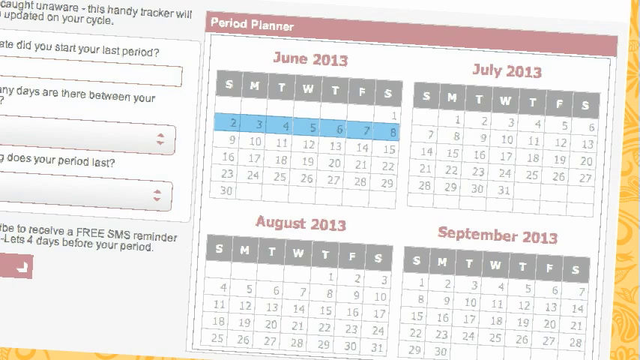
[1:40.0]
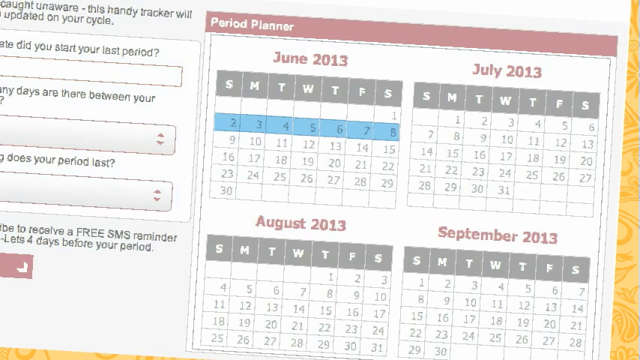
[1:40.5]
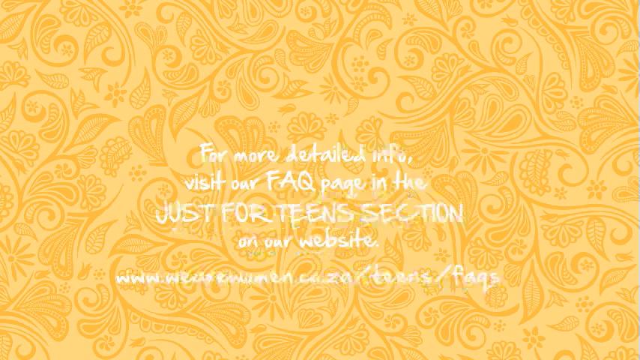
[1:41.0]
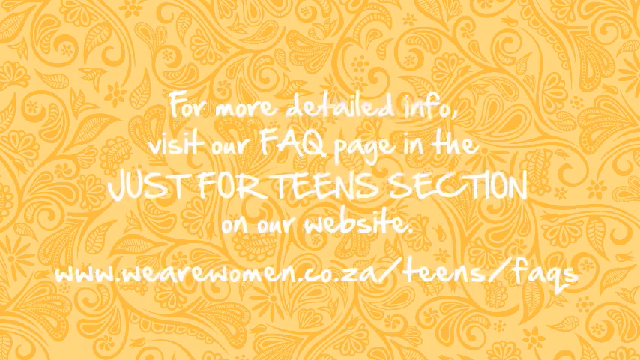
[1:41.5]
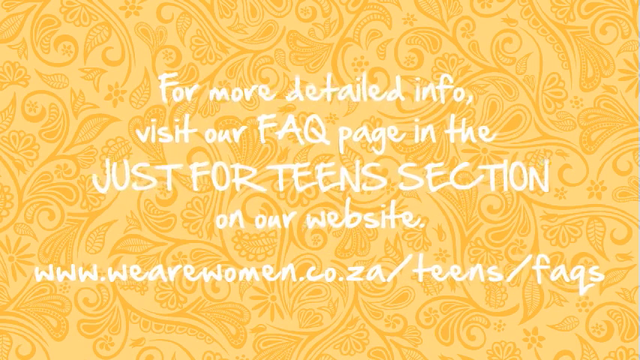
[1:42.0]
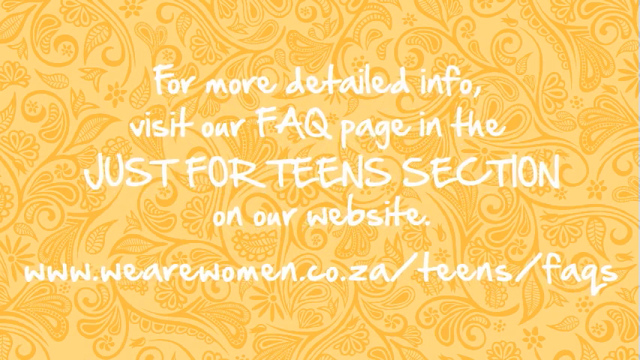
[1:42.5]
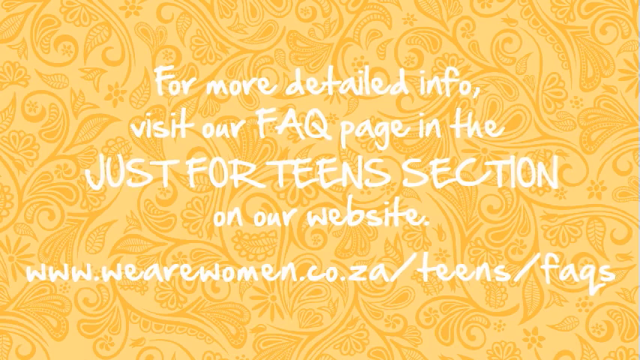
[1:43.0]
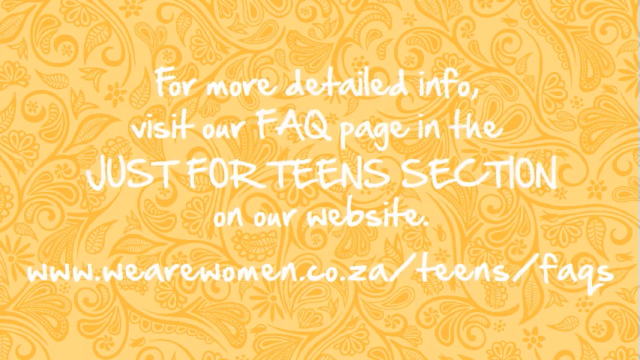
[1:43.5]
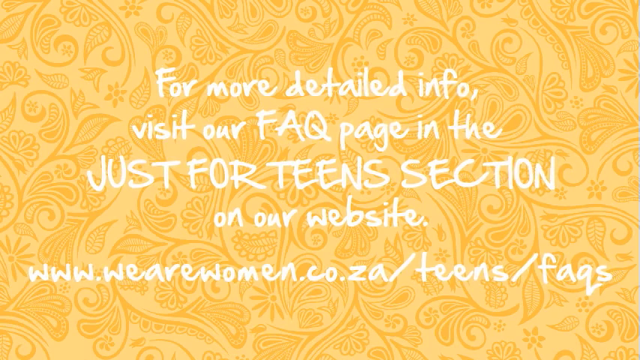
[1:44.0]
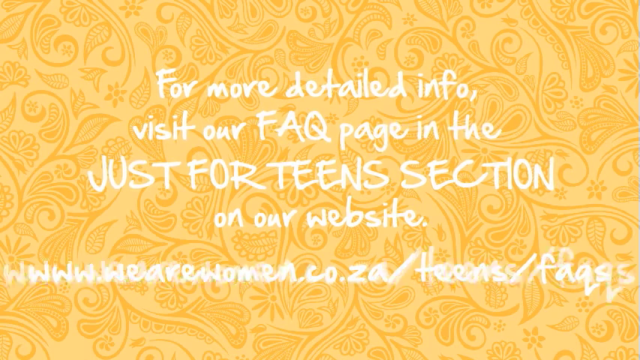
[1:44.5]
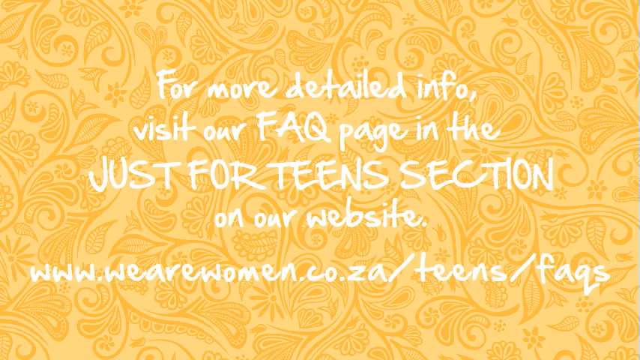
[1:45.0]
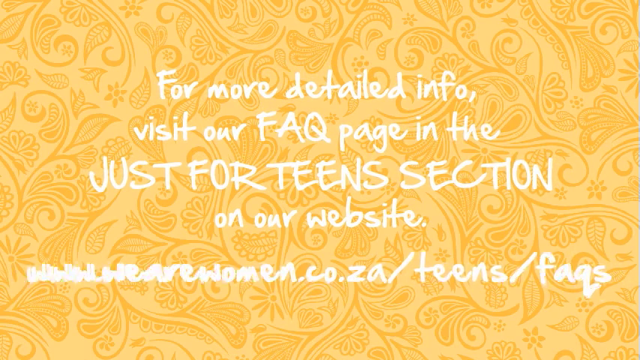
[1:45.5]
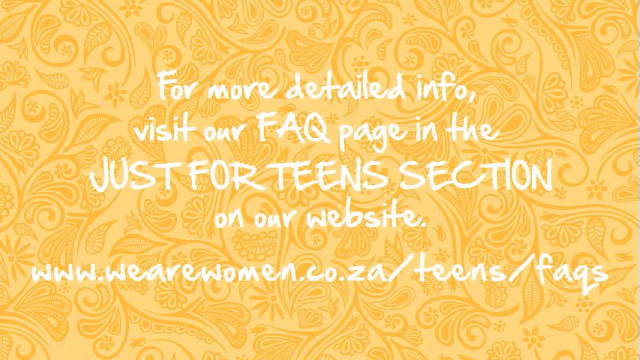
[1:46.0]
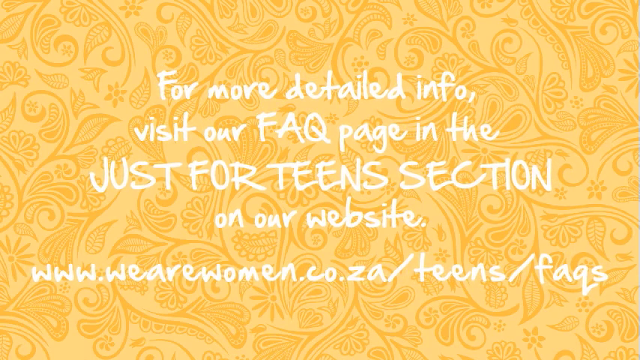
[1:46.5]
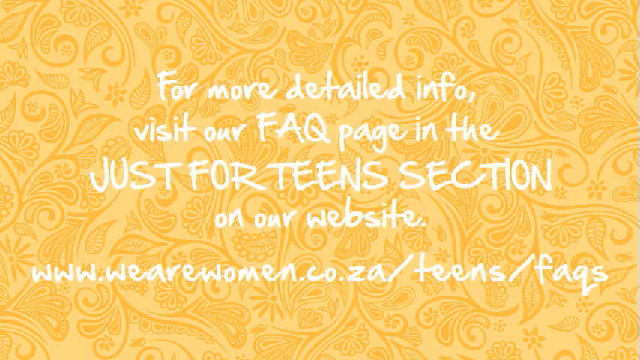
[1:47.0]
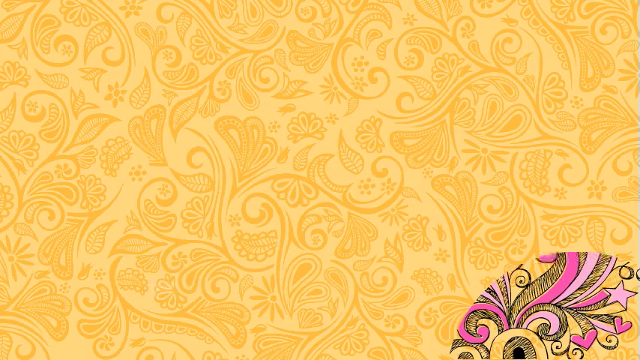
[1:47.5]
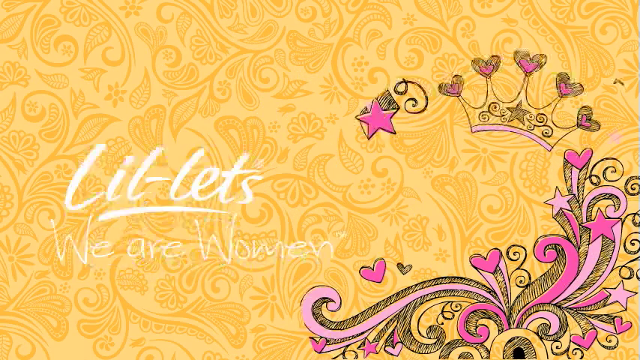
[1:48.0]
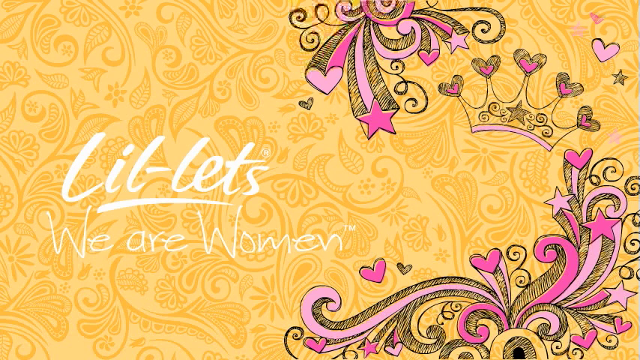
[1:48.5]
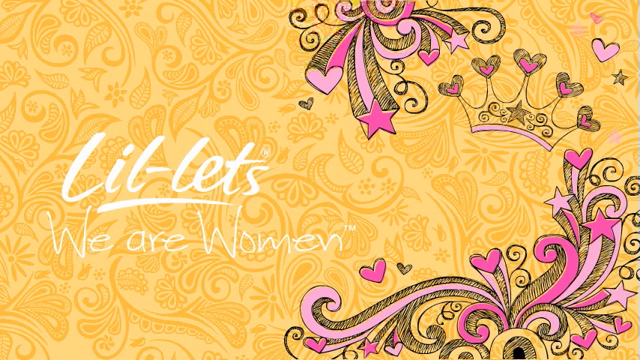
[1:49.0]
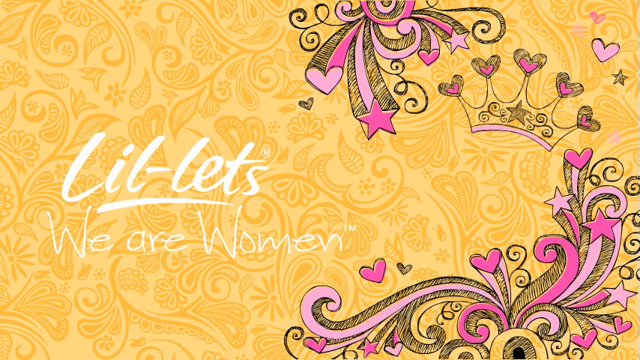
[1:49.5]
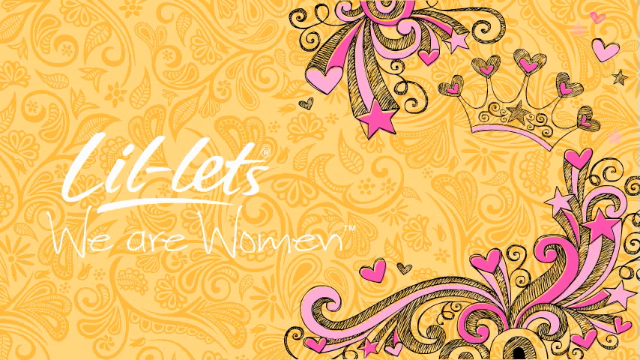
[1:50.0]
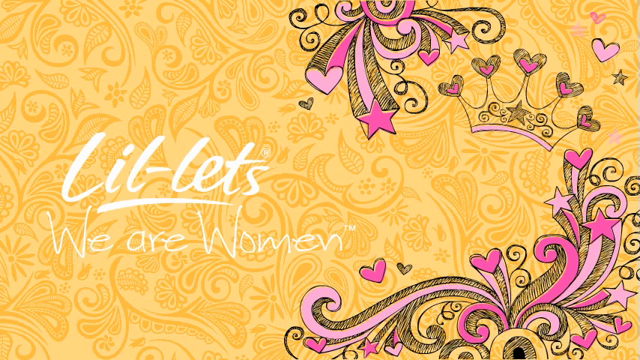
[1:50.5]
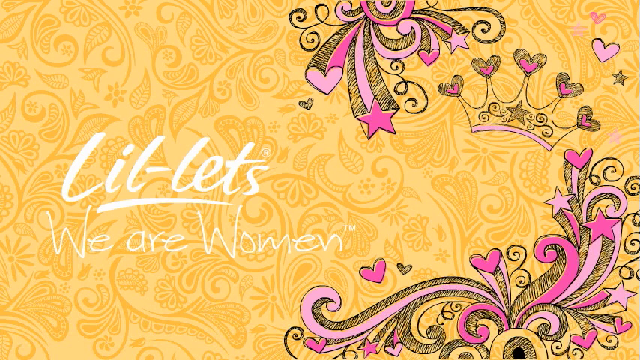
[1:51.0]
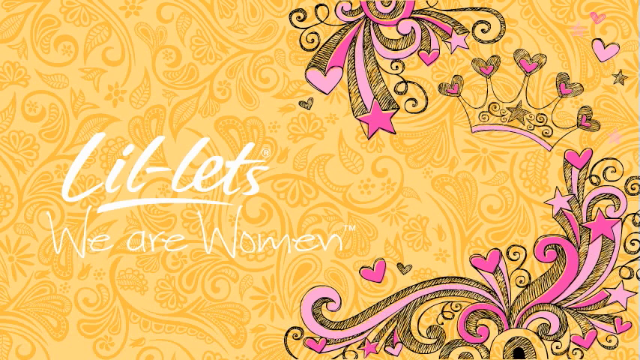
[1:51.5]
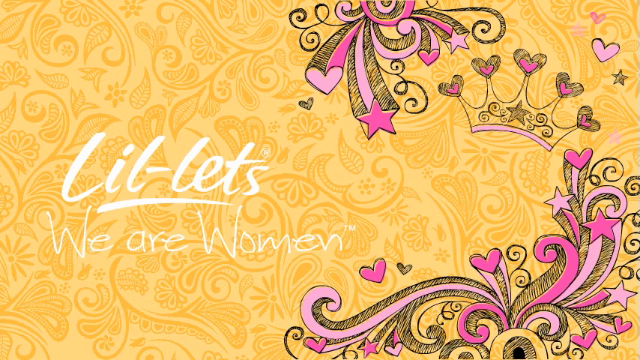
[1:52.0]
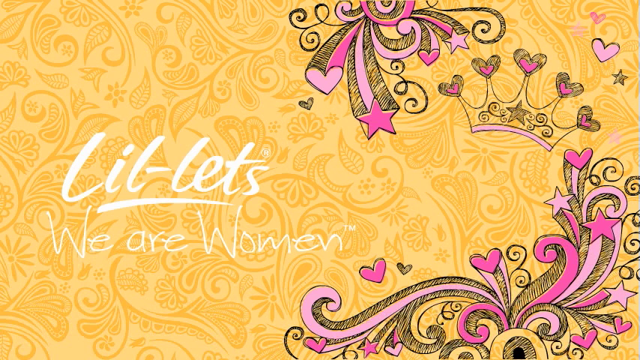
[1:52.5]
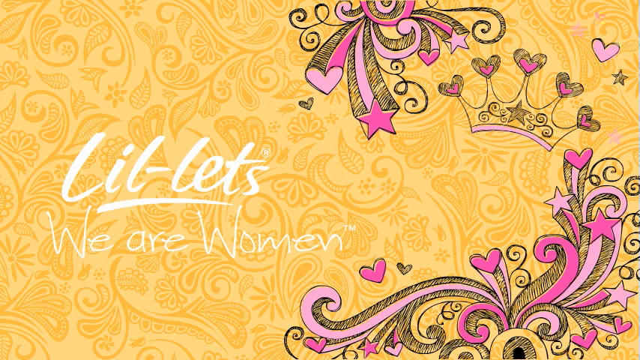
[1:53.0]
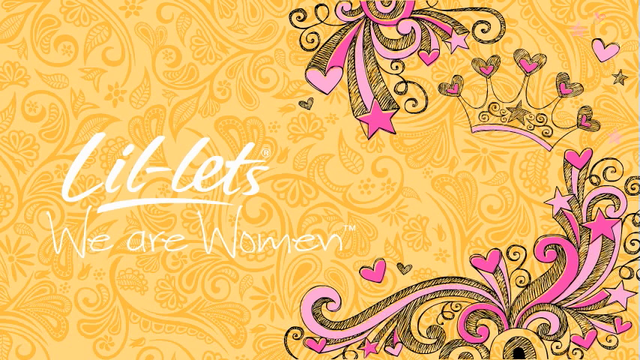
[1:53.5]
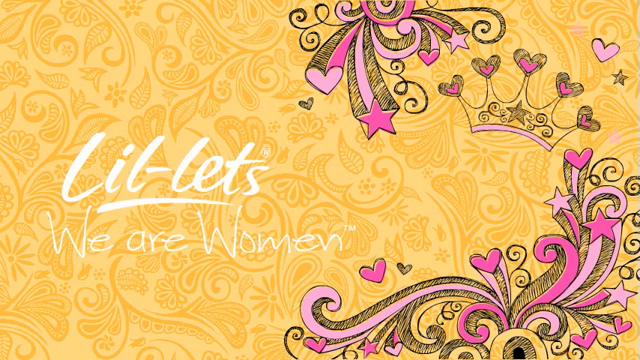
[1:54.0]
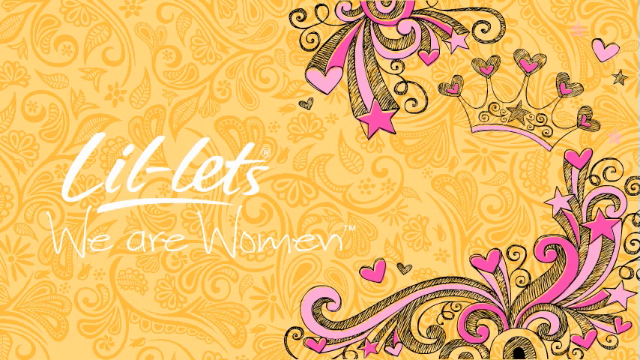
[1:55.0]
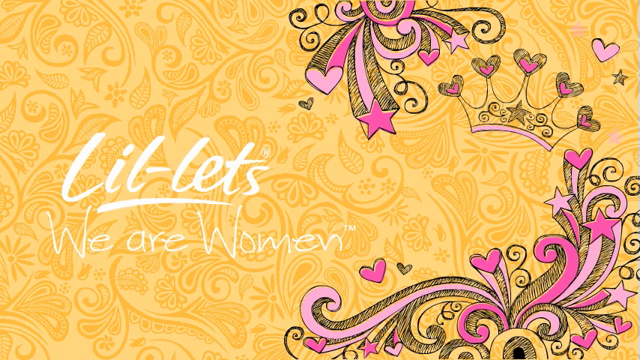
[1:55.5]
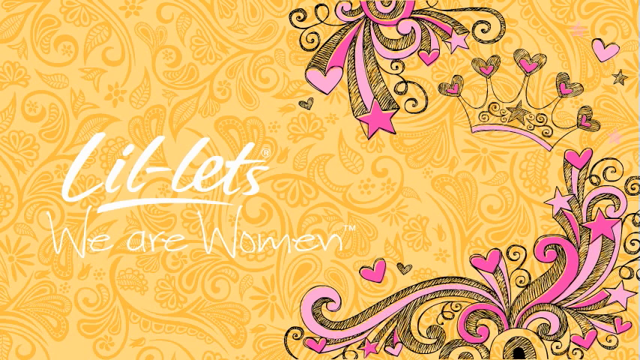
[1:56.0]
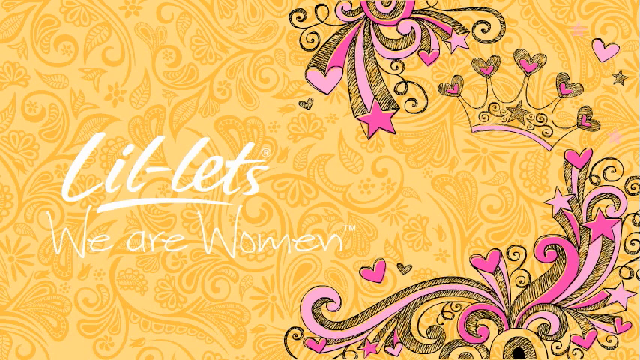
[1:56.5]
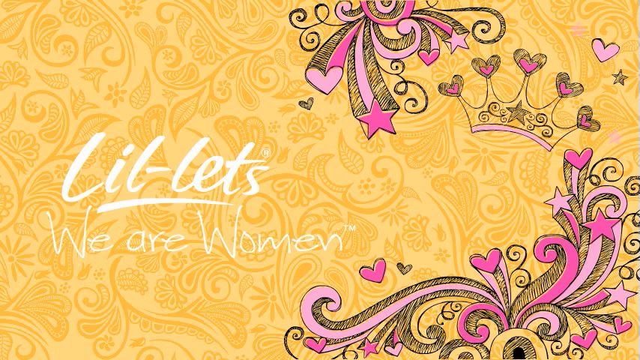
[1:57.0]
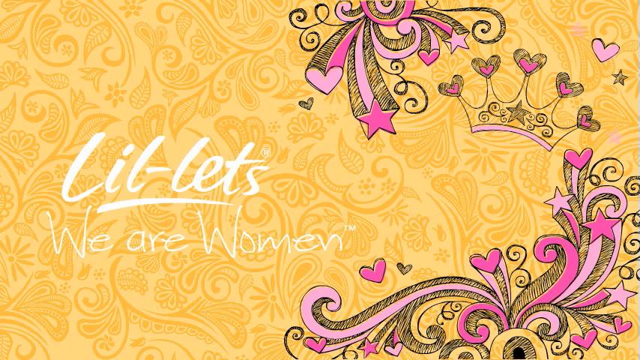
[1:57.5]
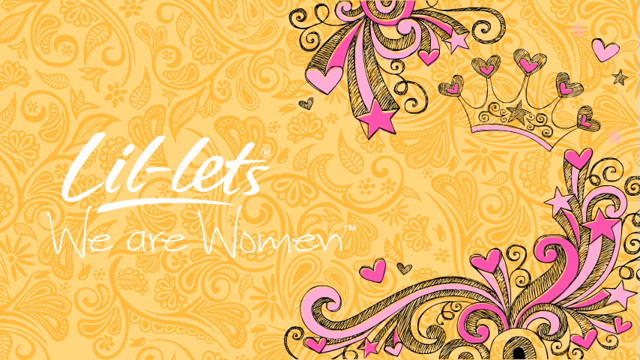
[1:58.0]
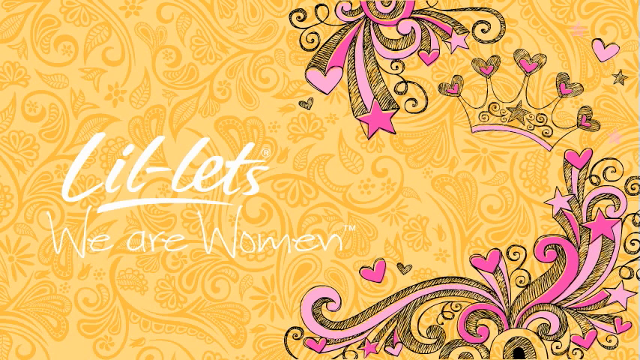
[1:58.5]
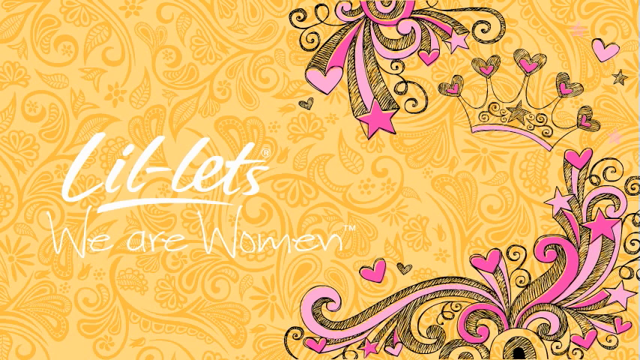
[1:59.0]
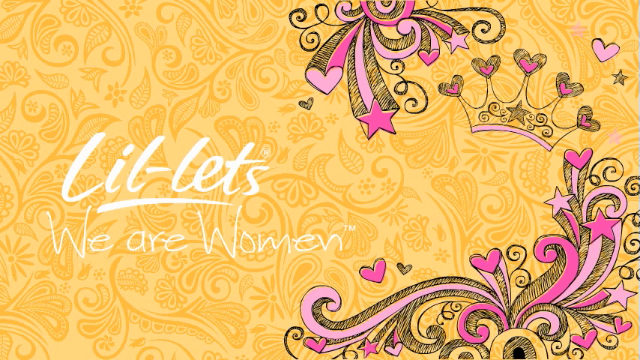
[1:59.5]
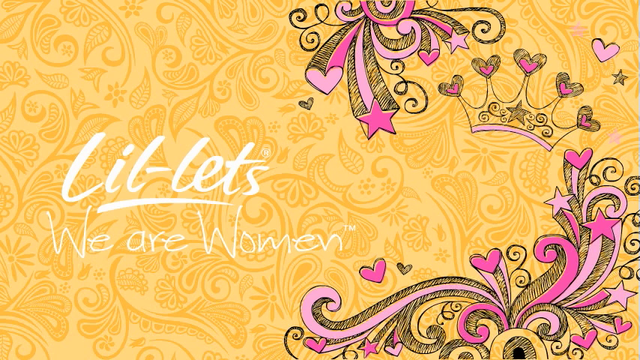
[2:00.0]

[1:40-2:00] A close-up of the calendar shows "June 2013" with "July 2013" to its right, and below June, "August 2013" with "September 2013" to its right. The days of the week are labeled S, M, T, W, T, F and S. Under June, starting on the Sunday, the days 2, 3, 4, 5, 6, 7 and 8 are highlighted in blue. This disappears, and a yellow background with a dark yellow floral pattern appears with white text reading "For more detailed information, visit our FAQ page in the Just for Teens section on our website." followed by a web address beginning "www.wearewomen.co.za". Then pink and light pink stars with little waves appear. A crown appears on the right, with five hearts on top containing pink hearts. On the left side of the screen, "LIL-LETS" appears underlined, with "we are women" below it.